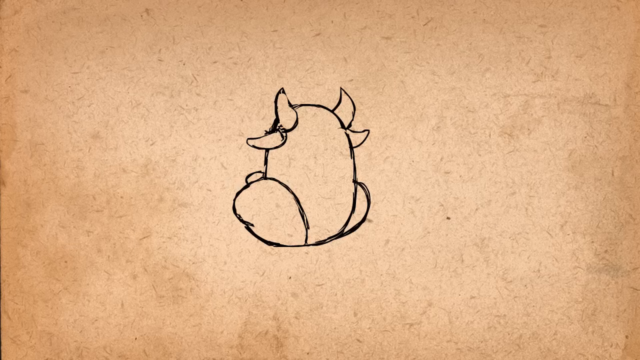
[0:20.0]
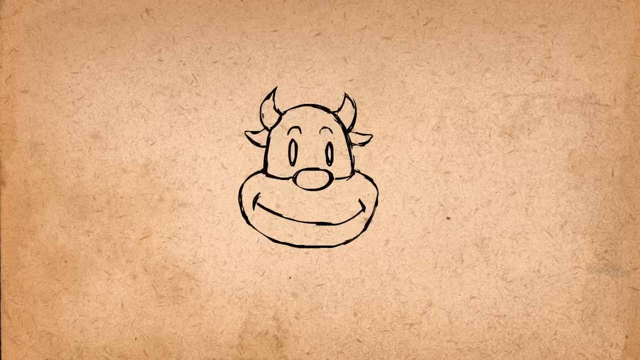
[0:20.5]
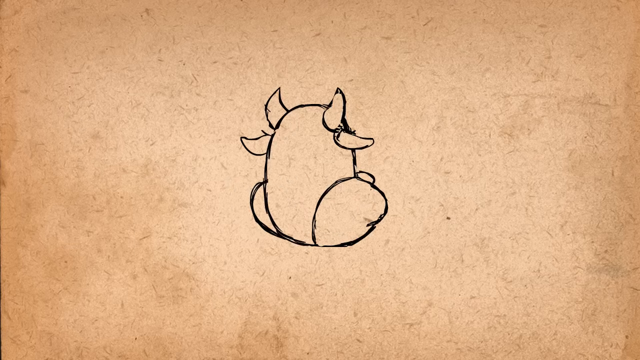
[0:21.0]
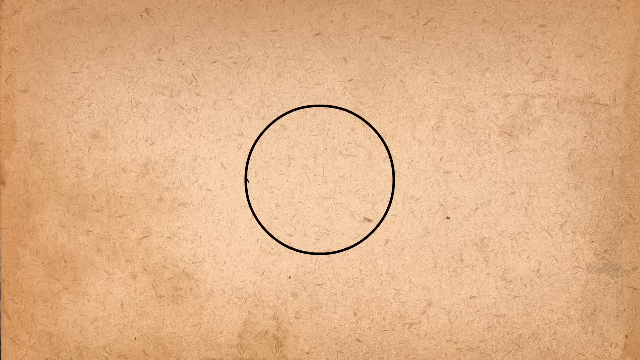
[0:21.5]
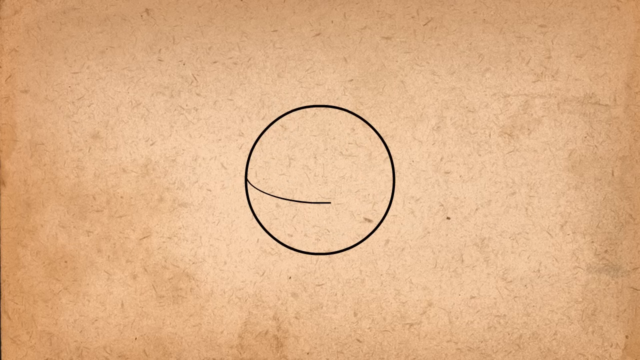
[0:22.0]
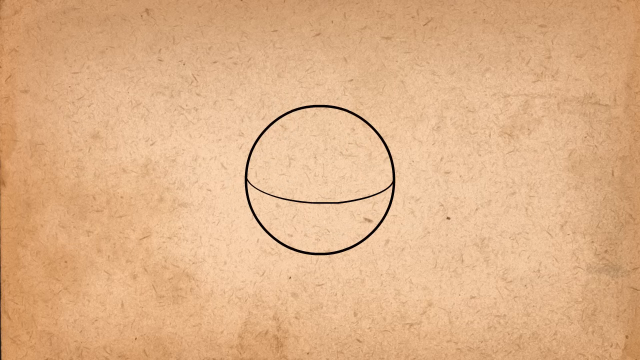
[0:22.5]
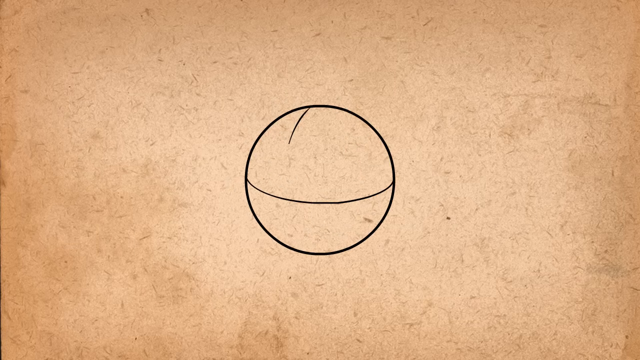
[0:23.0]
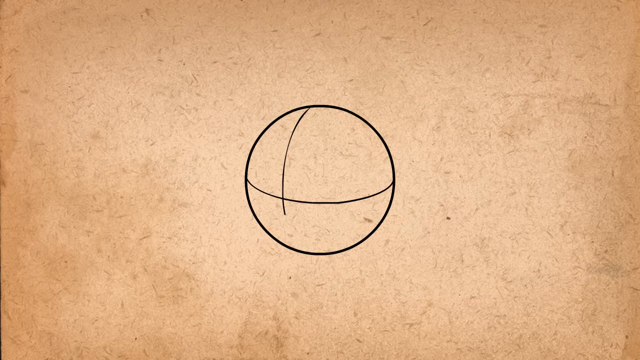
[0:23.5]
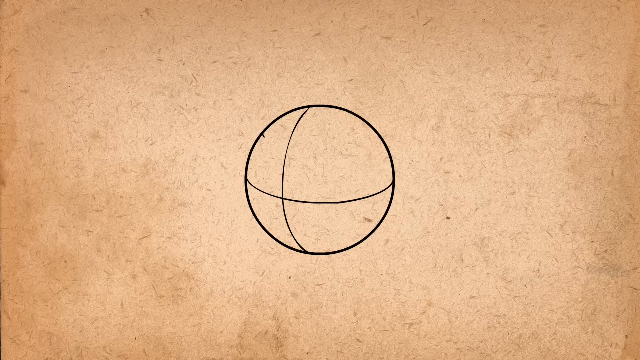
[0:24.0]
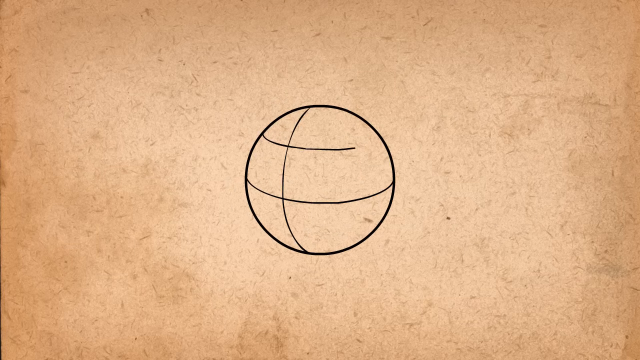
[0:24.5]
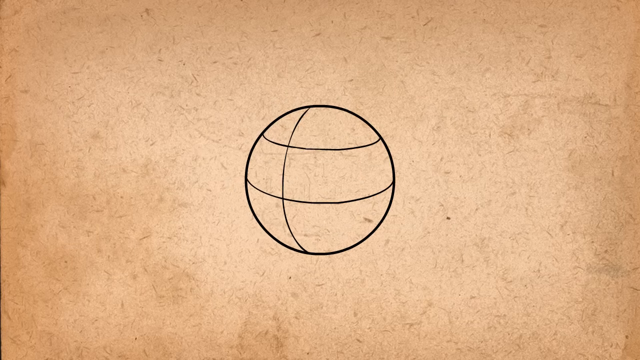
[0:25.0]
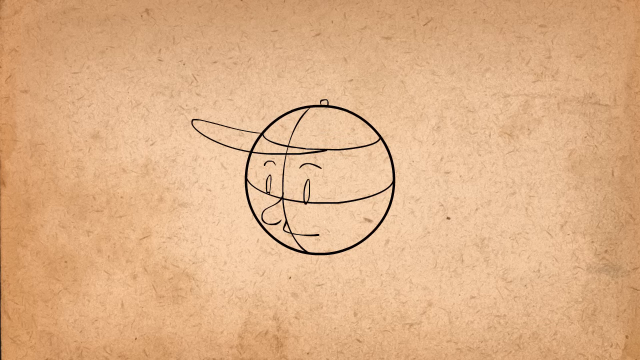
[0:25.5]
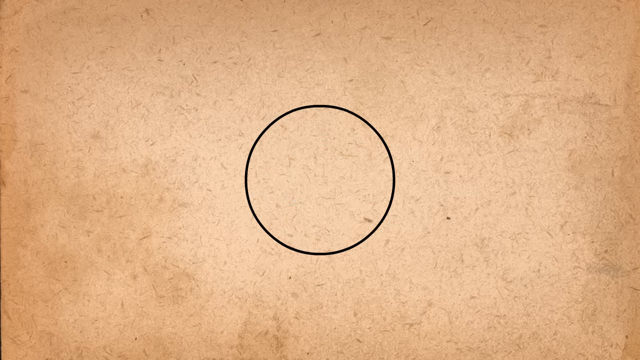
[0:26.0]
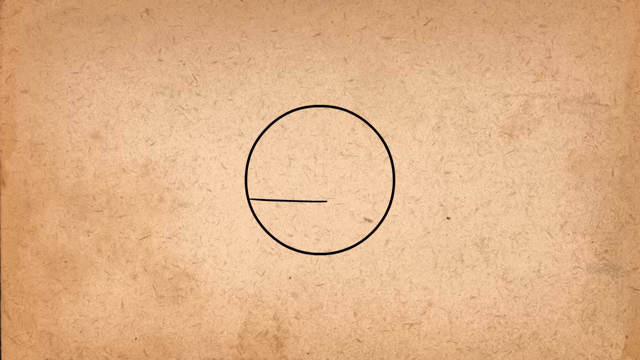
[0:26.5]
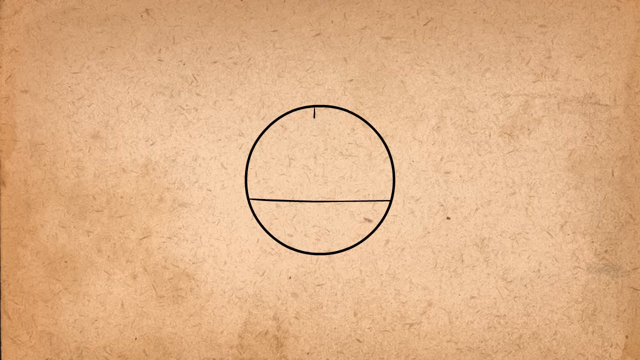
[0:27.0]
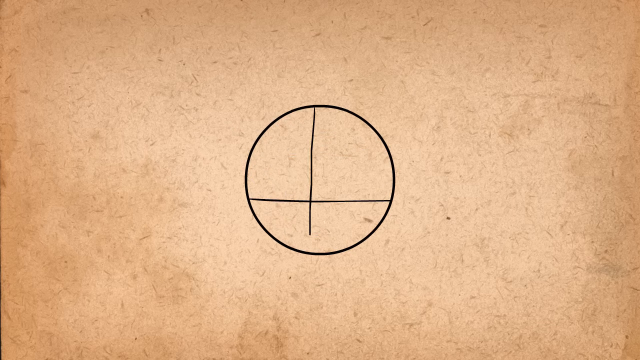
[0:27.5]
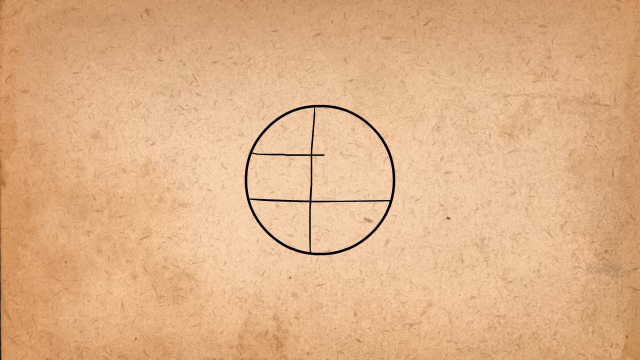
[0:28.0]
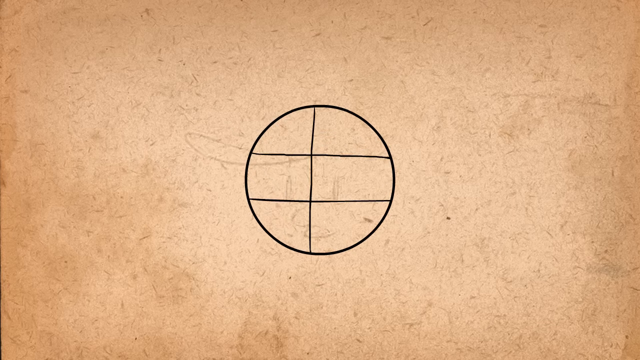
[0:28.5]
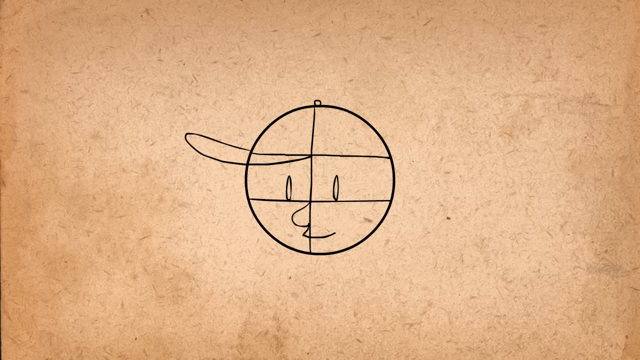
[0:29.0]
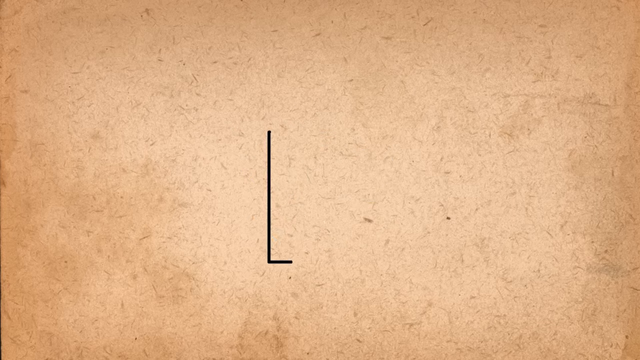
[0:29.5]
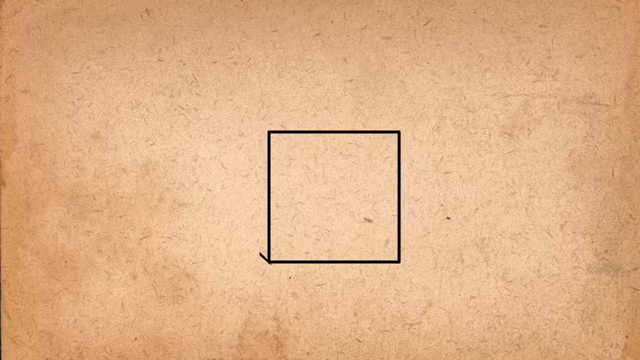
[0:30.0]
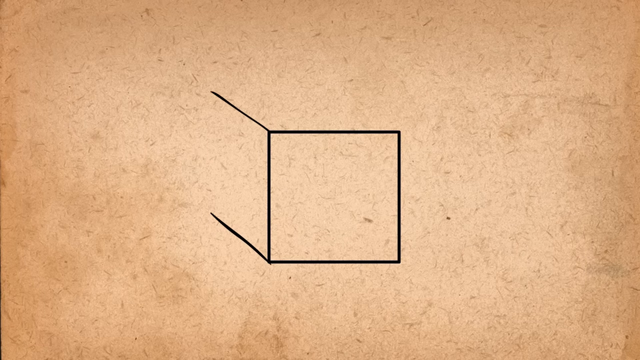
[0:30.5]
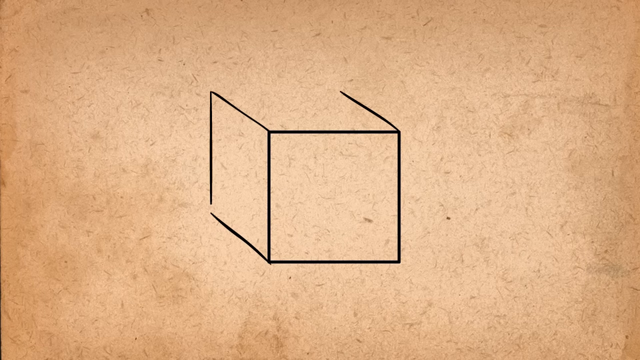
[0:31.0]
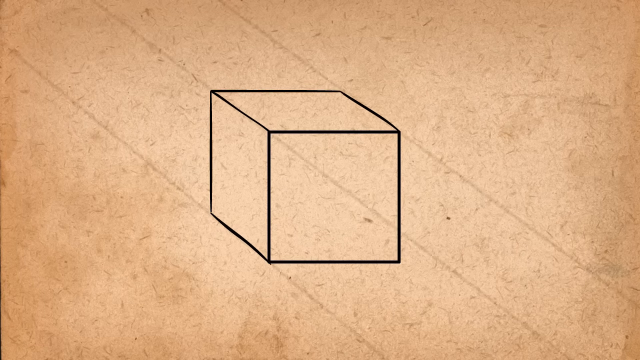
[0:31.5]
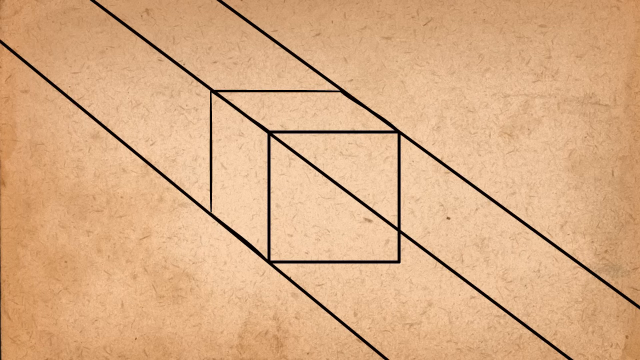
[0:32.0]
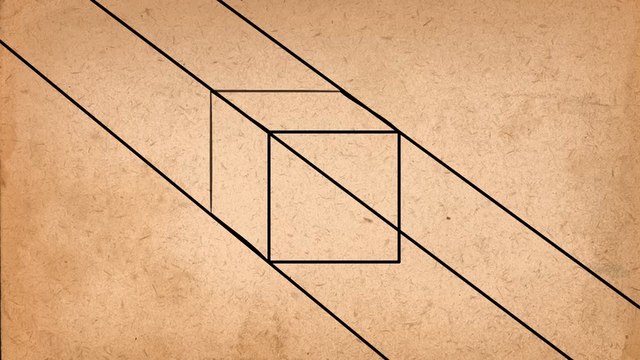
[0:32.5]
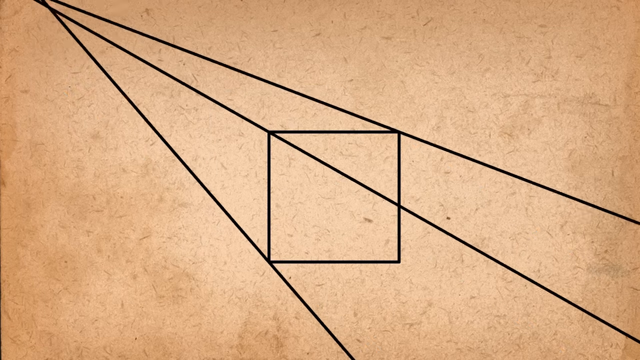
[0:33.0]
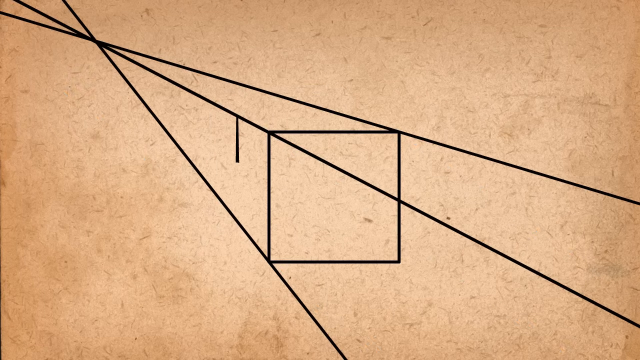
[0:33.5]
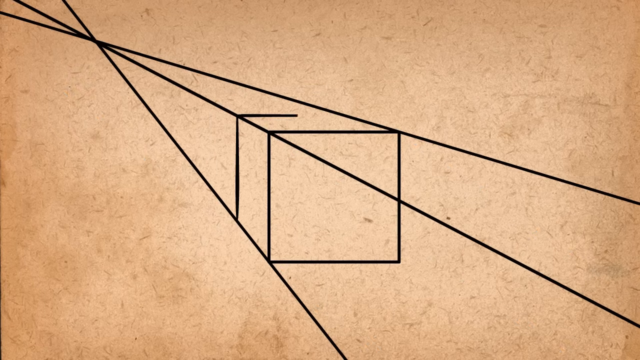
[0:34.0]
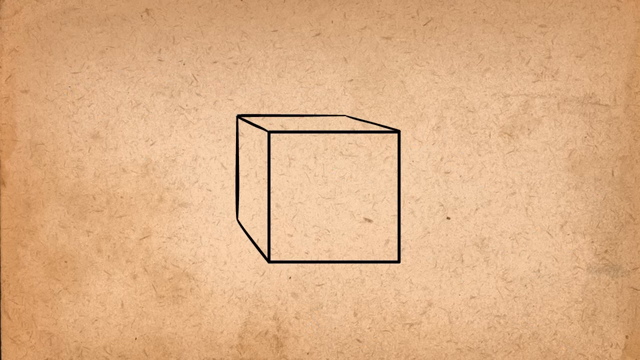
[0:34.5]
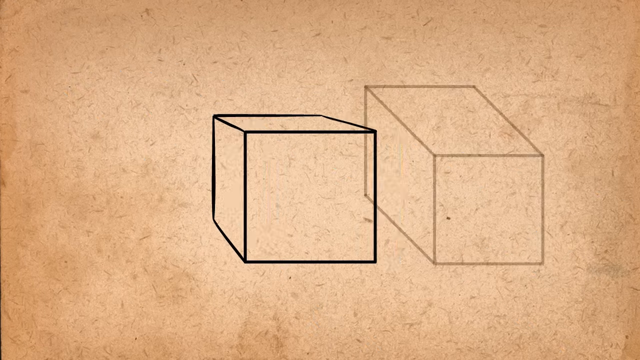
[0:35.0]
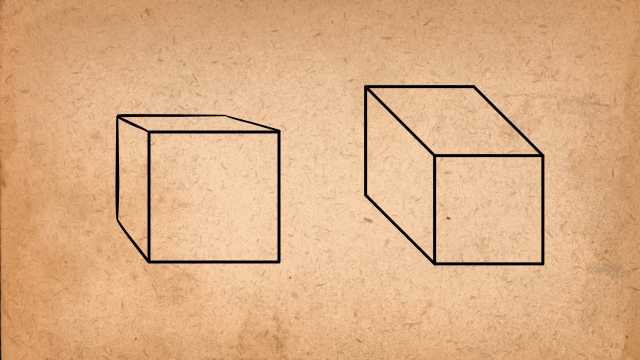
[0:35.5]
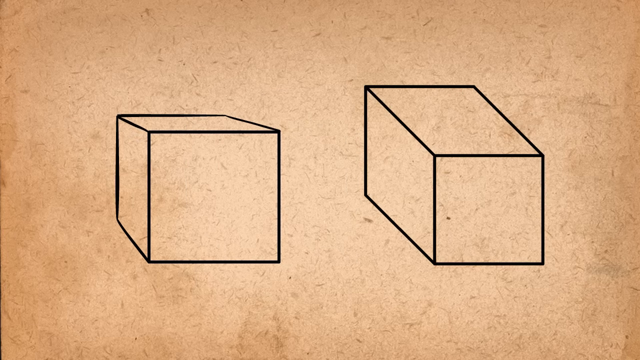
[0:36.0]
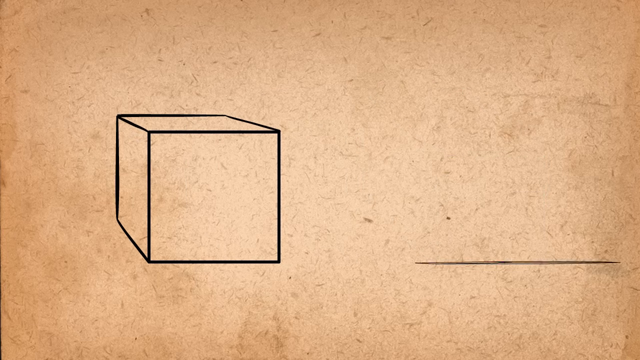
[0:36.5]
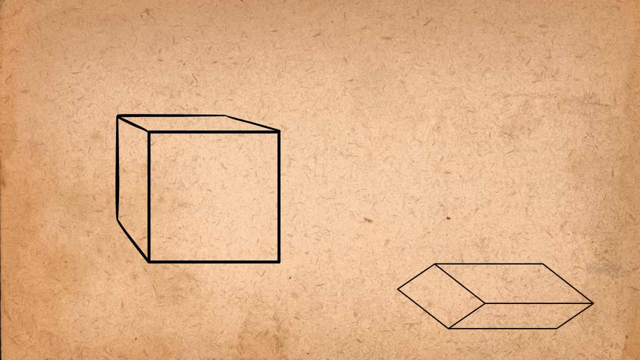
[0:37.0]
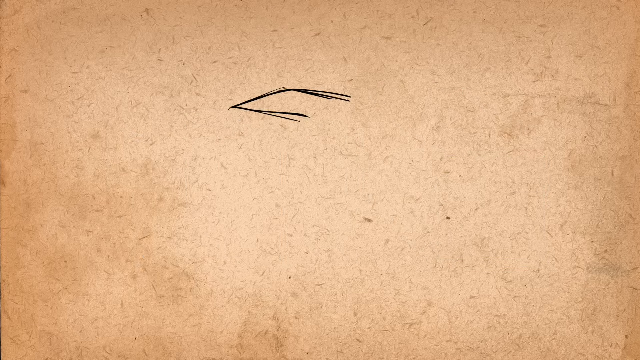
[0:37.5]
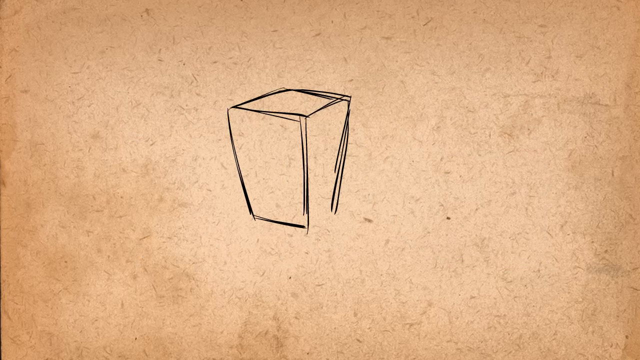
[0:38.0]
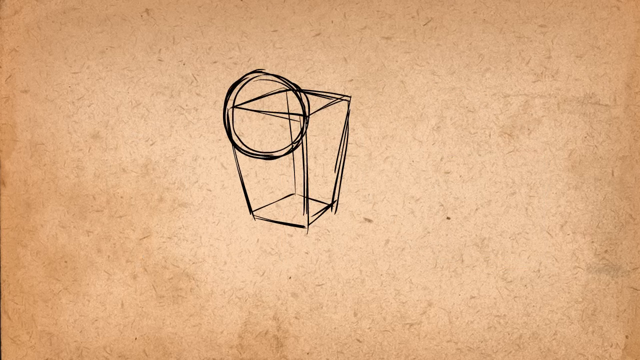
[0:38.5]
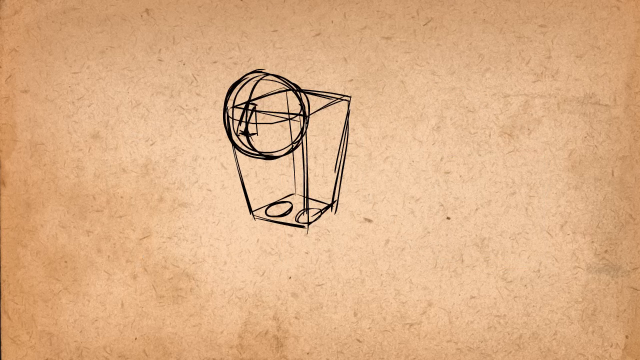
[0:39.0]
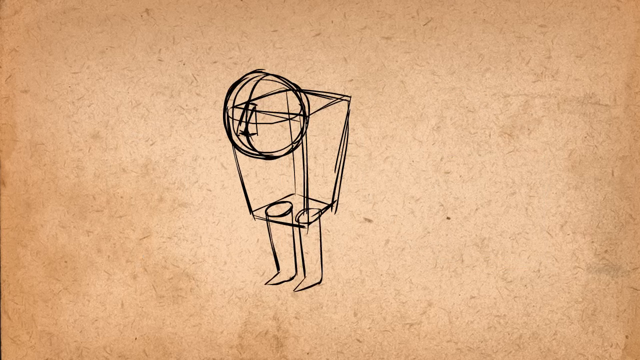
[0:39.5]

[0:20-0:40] The video, titled "The 12 Principles of Animation" by Frank Thomas and Ollie Johnson, continues with number 11, the solid drawing section. A cute cow head with short horns, ears that jut out, a big smile and a cute nose turns 360 degrees from the viewer's right to left. A circle is then divided, and two eyes, a nose, a mouth and a baseball cap that protrudes to the viewer's left are drawn on that same circle. A blank circle appears and the same process is done again. Finally, a square is made into a cube to give it a three-dimensional look.